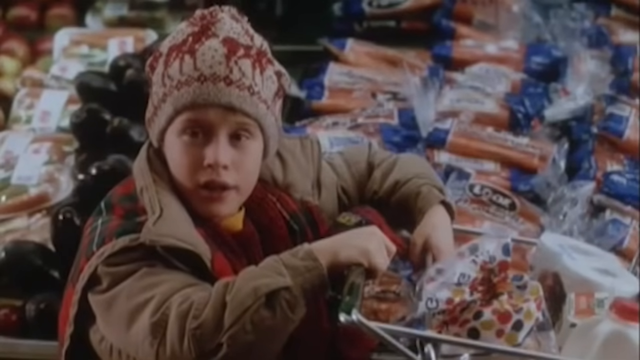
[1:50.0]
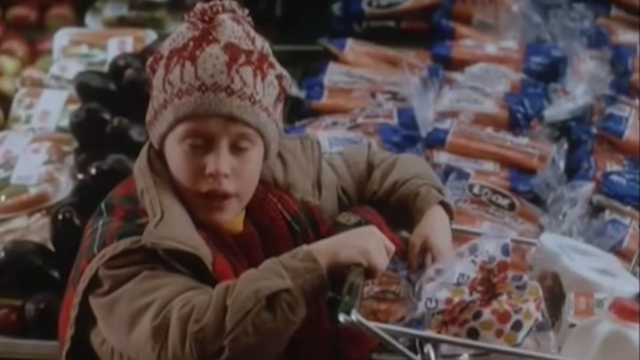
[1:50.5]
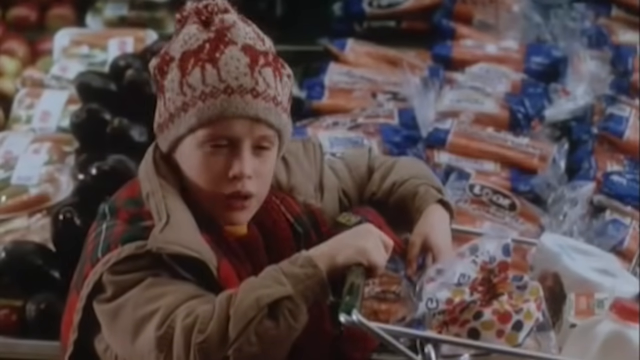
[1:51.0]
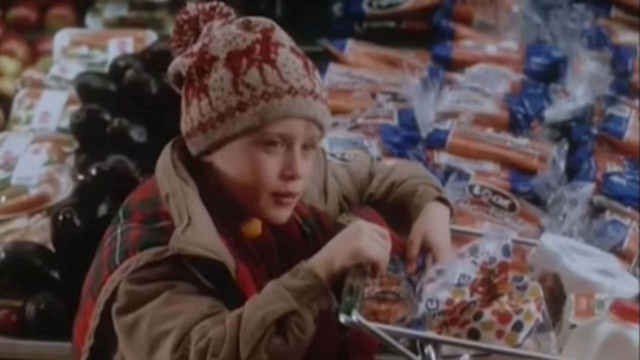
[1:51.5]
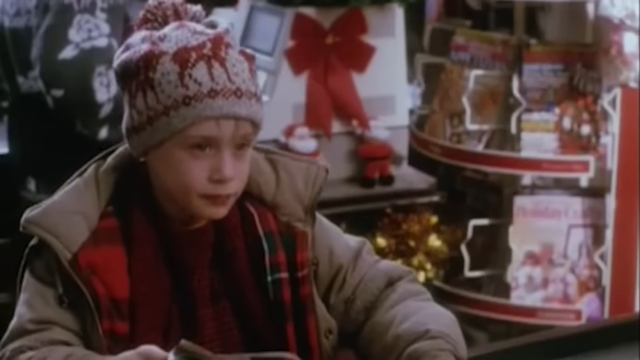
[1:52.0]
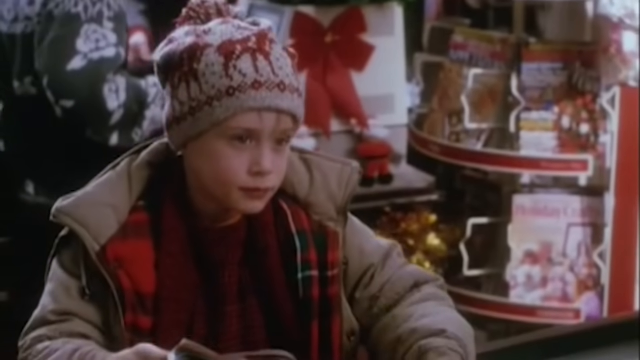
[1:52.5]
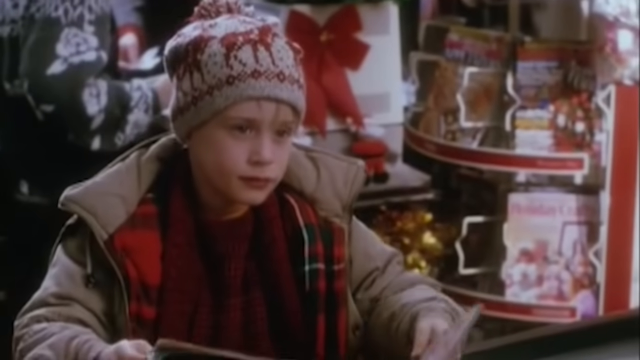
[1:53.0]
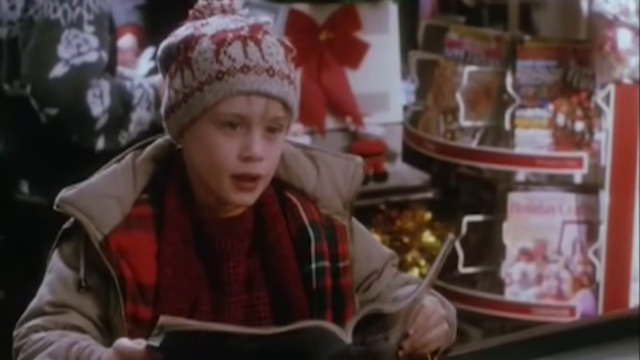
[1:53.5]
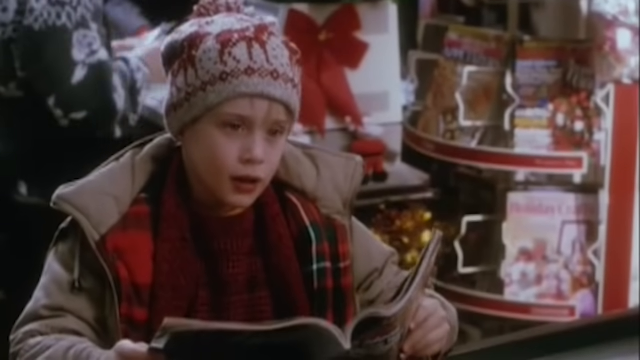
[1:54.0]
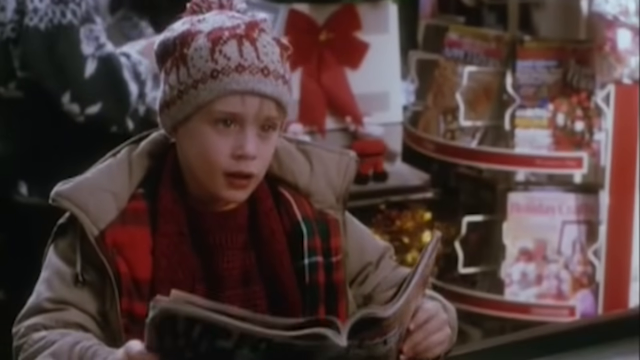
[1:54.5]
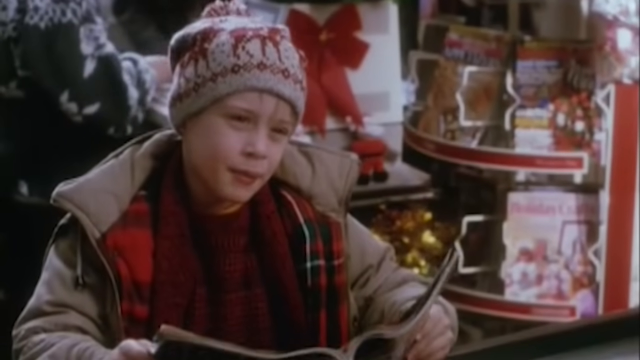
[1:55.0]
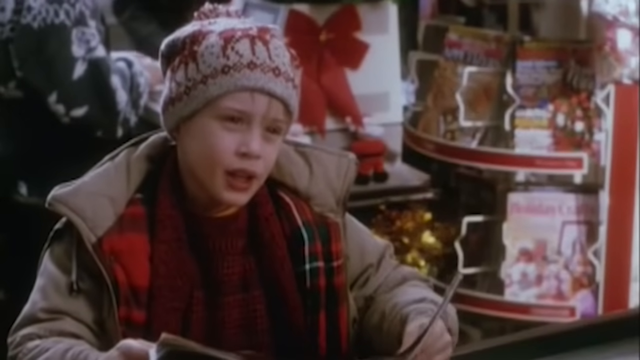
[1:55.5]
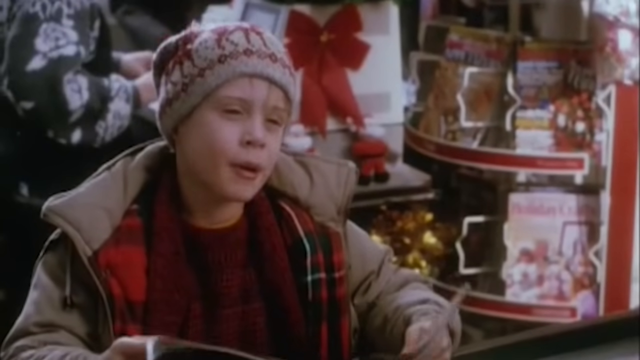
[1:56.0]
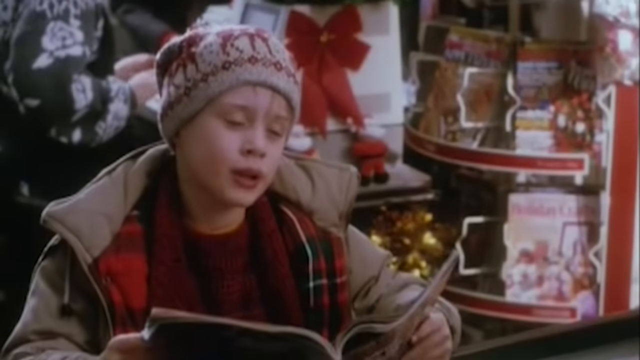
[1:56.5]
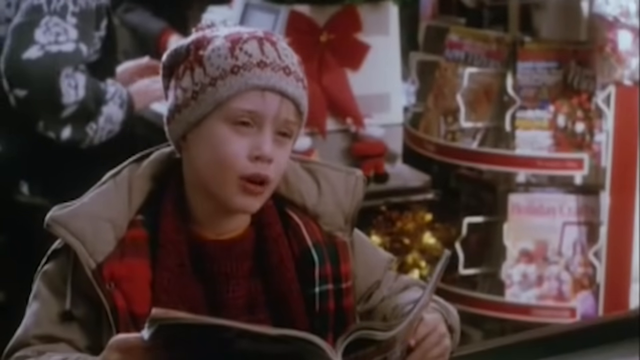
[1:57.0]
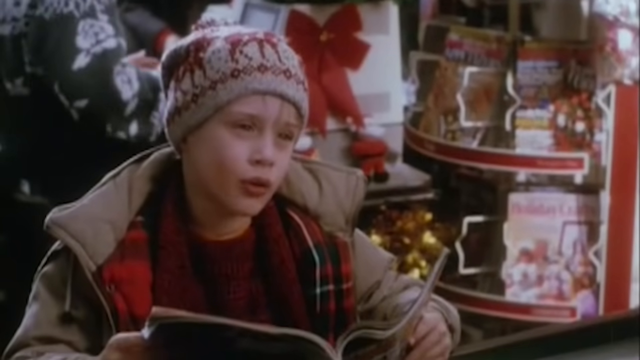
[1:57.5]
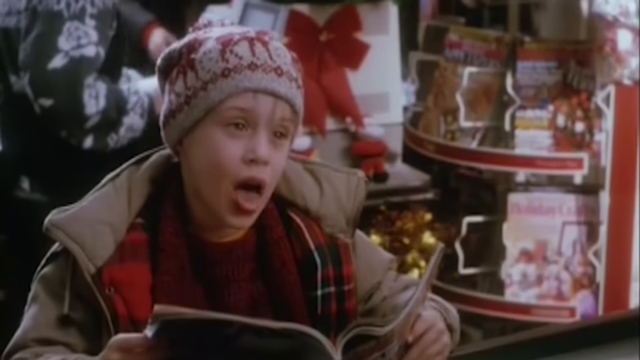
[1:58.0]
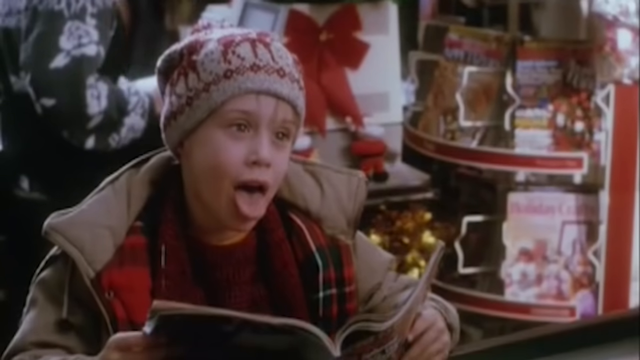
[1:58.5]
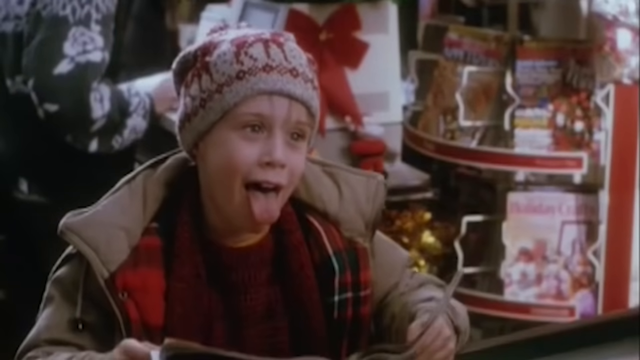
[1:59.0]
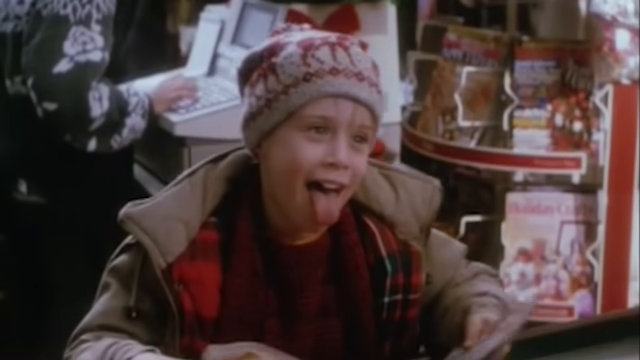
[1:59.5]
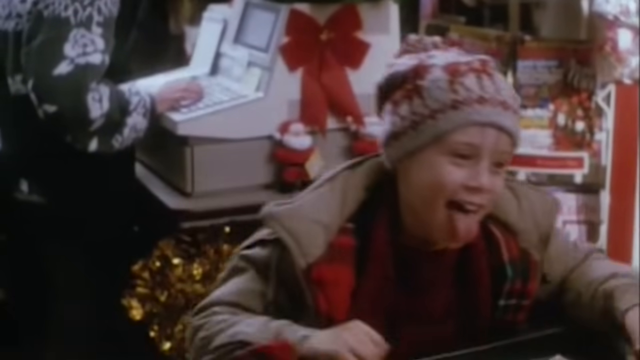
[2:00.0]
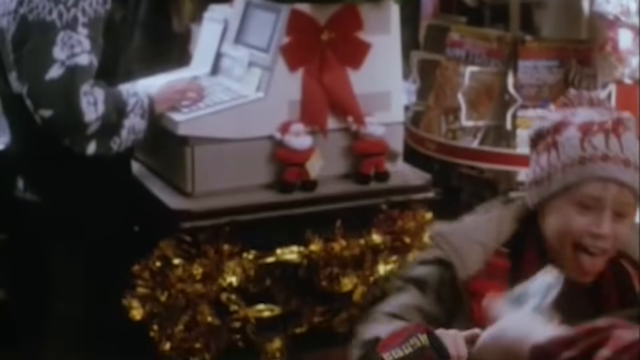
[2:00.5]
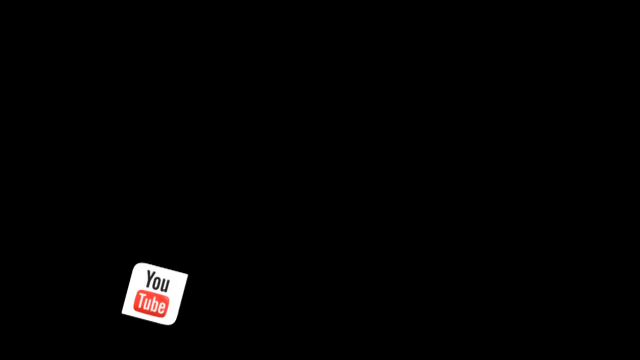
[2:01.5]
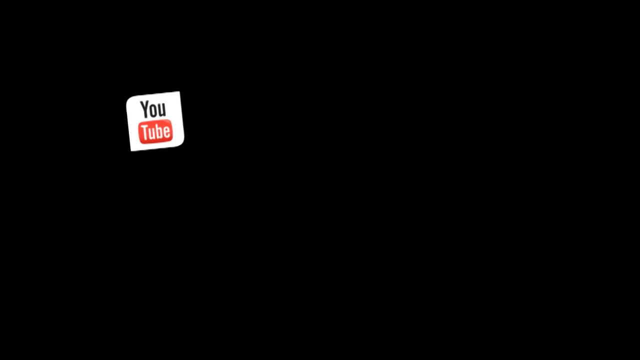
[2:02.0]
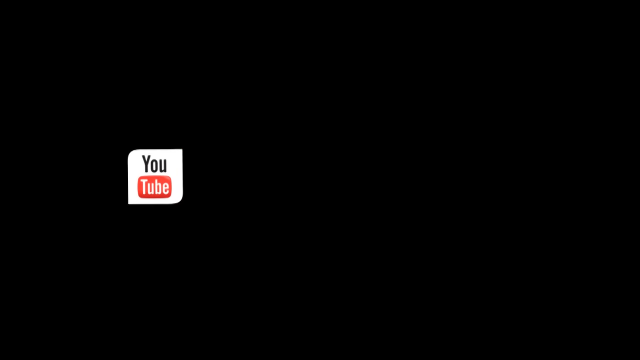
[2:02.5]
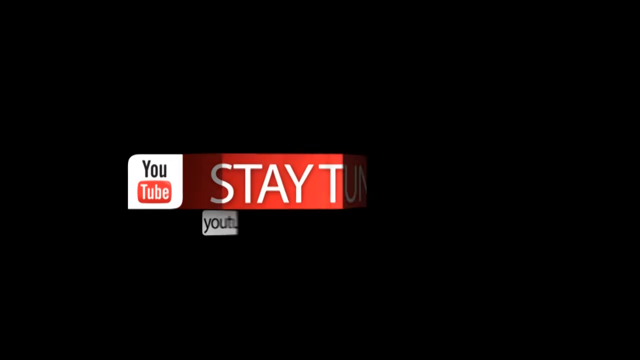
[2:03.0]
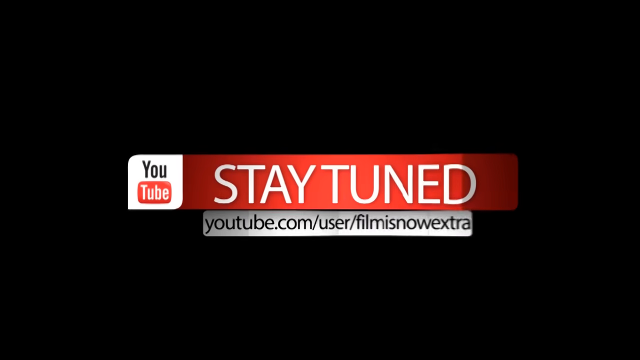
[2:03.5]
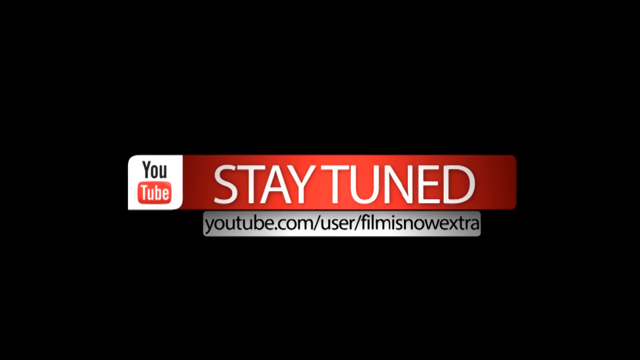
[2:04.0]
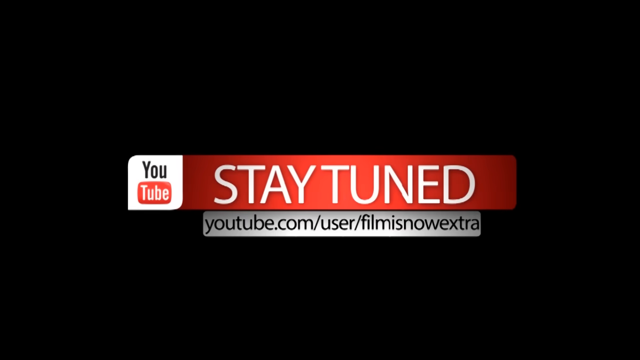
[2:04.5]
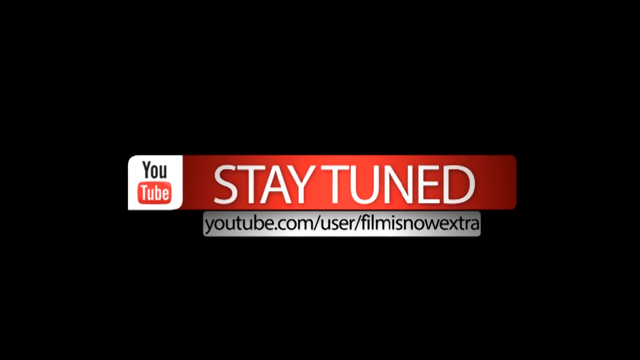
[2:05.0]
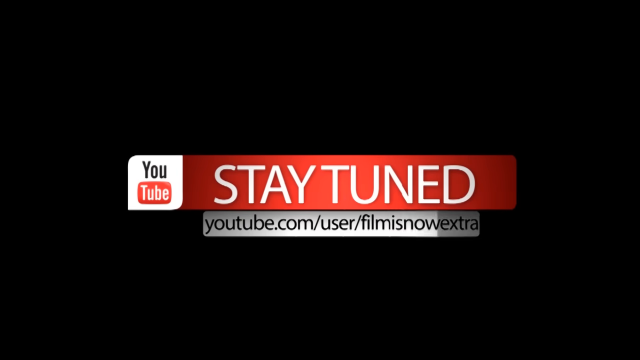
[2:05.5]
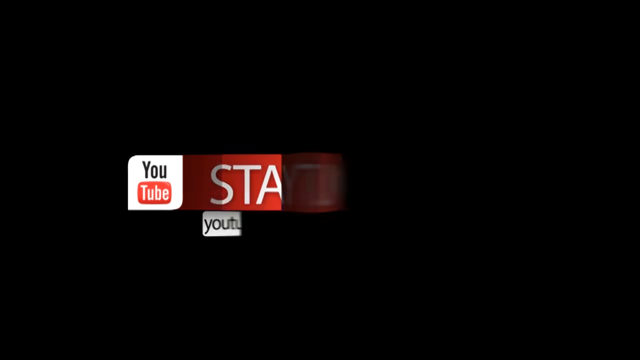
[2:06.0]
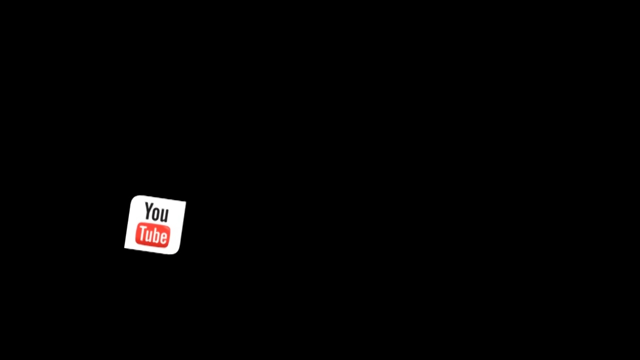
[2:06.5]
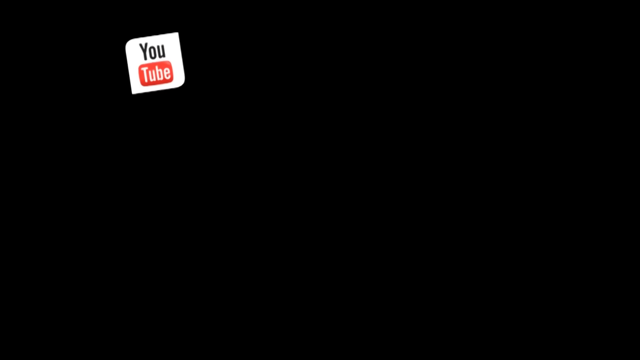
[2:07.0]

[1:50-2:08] Kevin holds his fingers in a shopping cart, with a lot of bread behind him, and appears to be having the time of his life. Later he talks to a cashier about something, with some Christmas presents behind him. He shows his tongue to somebody behind him. A person is typing on a keyboard. Kevin wears a brown jacket with a red shirt under it, and the back of the jacket has a Christmas-themed pattern of red and green with blue lines.